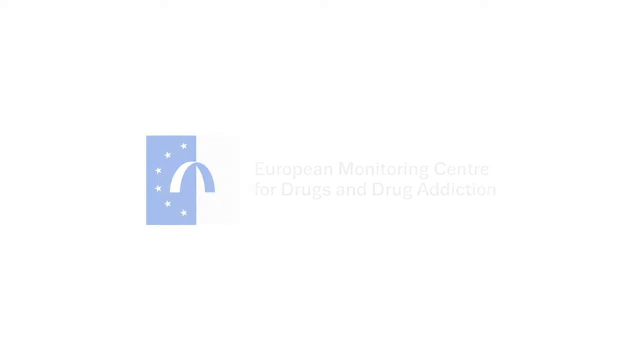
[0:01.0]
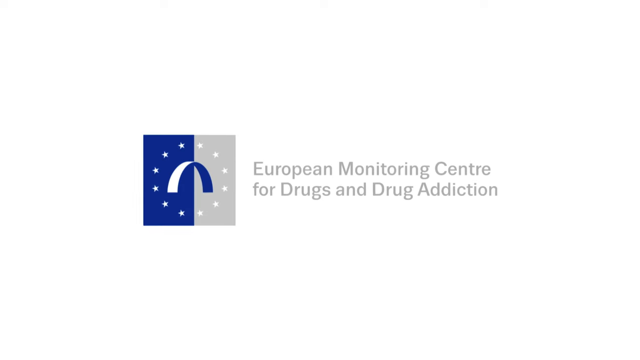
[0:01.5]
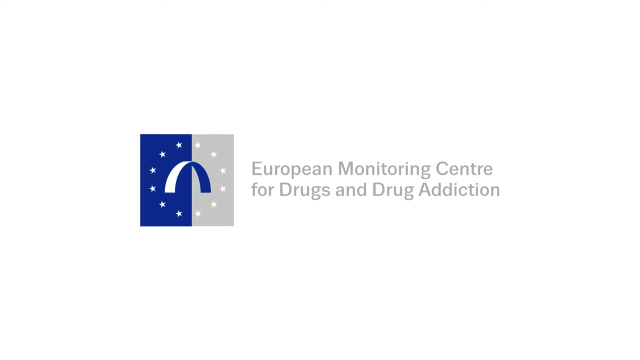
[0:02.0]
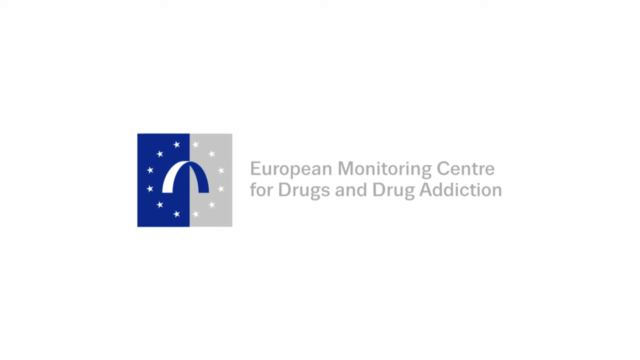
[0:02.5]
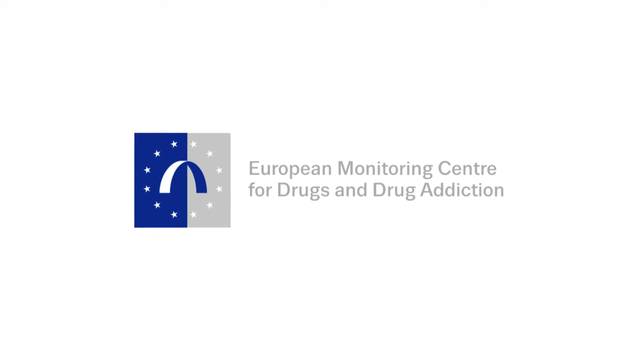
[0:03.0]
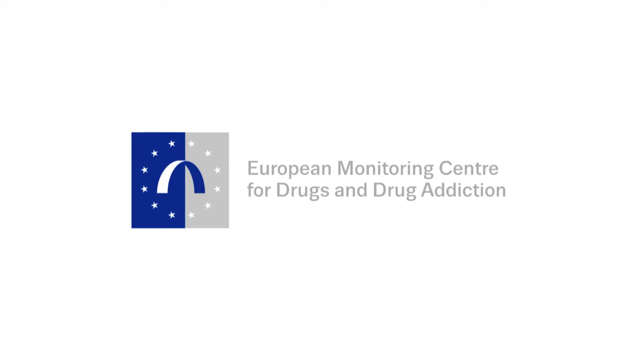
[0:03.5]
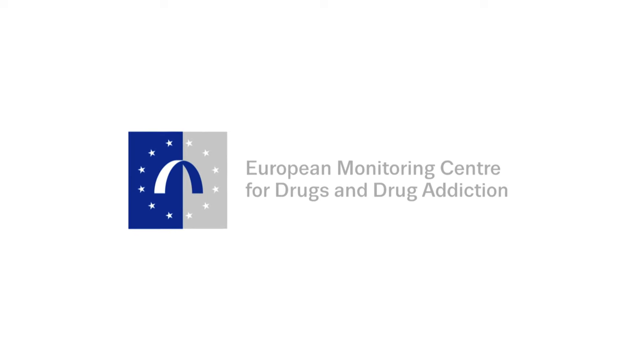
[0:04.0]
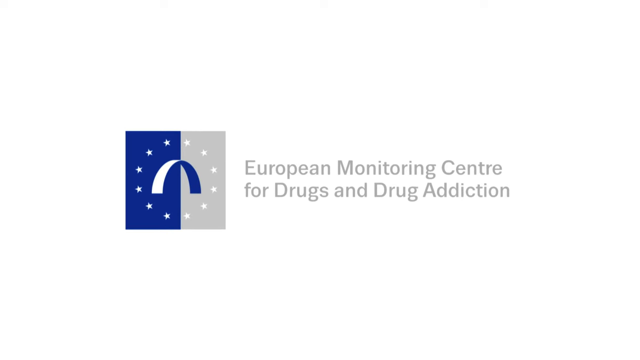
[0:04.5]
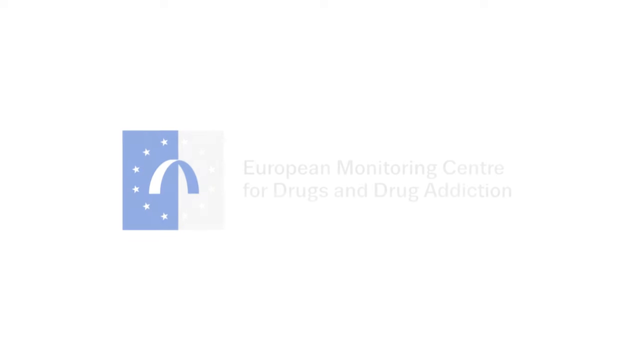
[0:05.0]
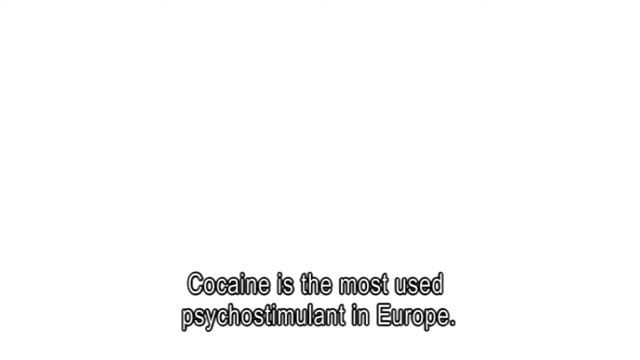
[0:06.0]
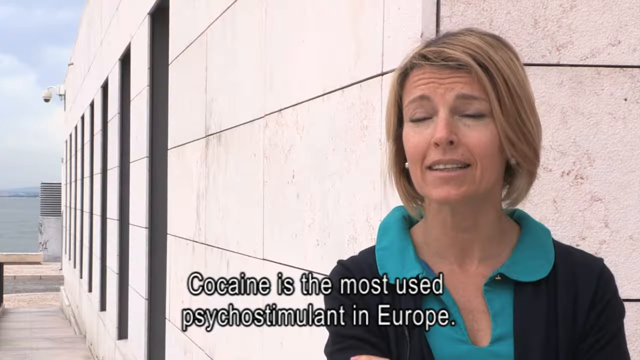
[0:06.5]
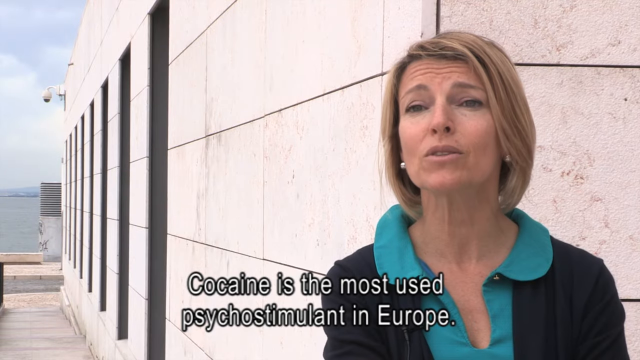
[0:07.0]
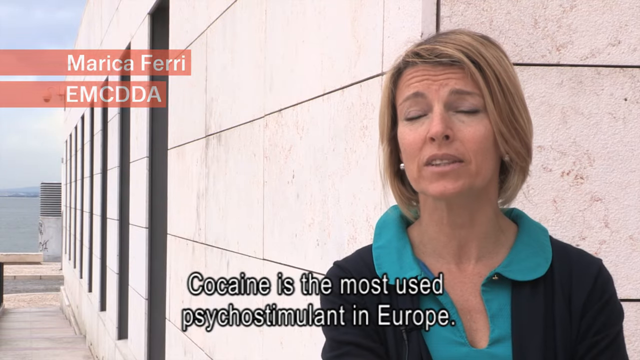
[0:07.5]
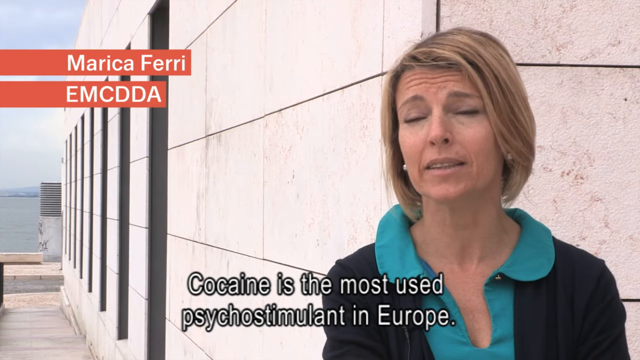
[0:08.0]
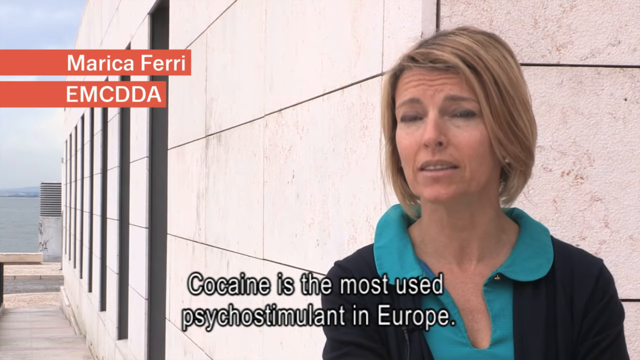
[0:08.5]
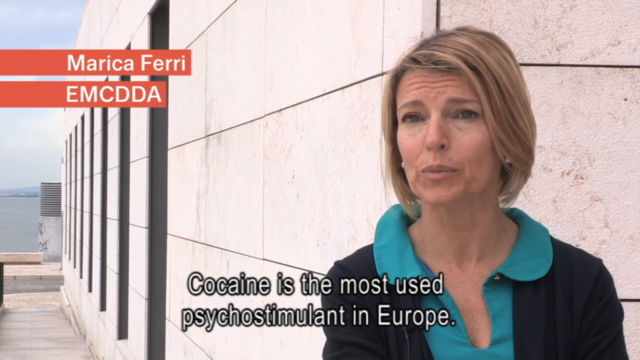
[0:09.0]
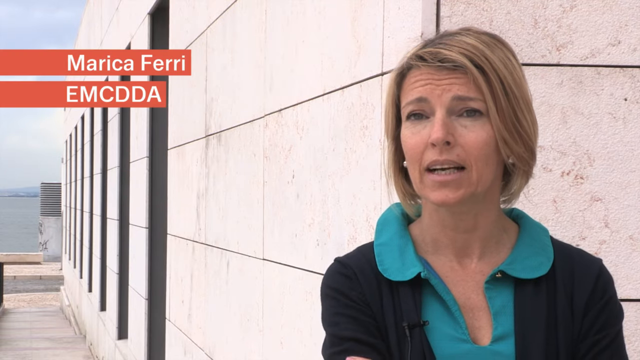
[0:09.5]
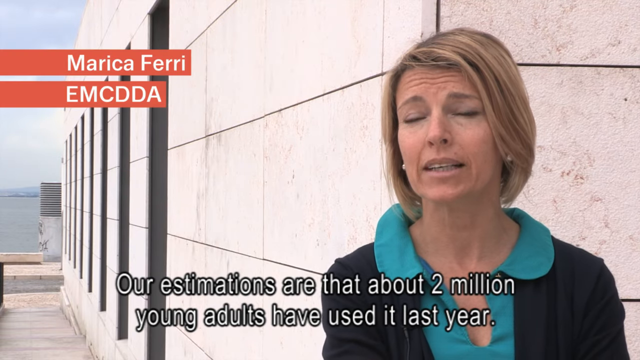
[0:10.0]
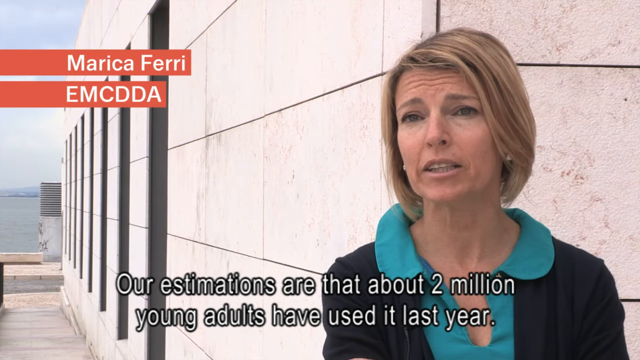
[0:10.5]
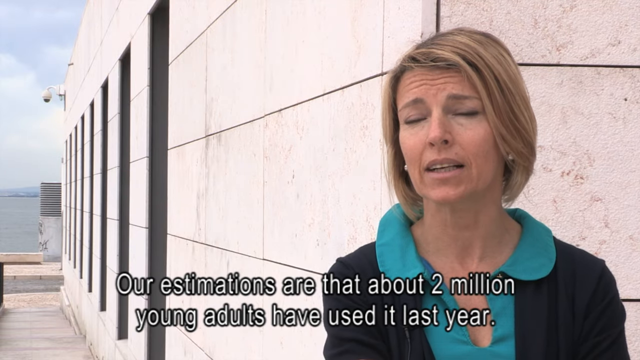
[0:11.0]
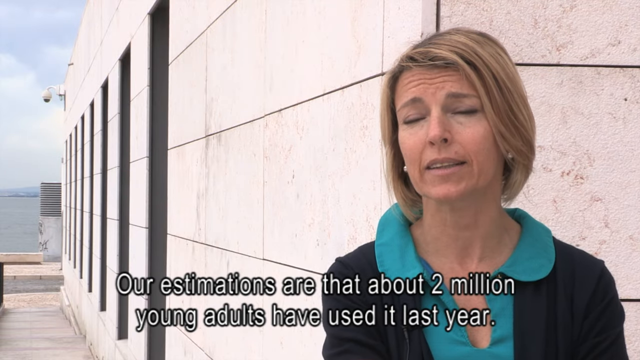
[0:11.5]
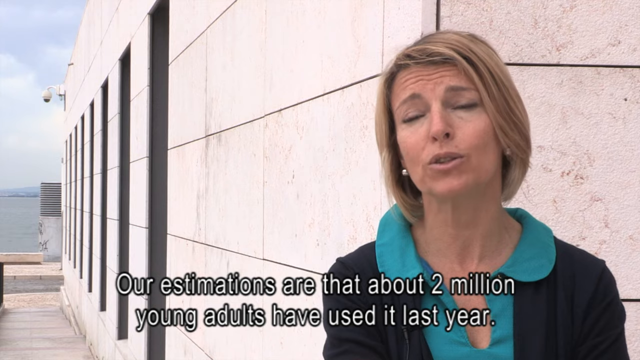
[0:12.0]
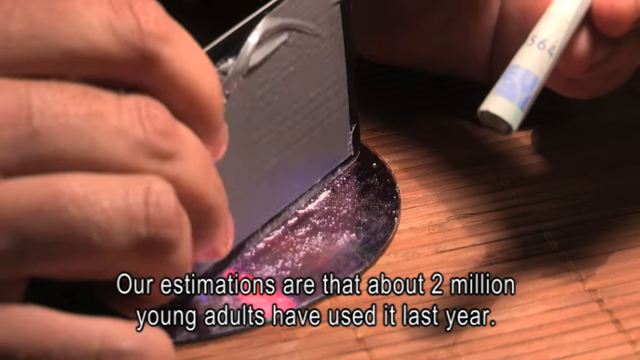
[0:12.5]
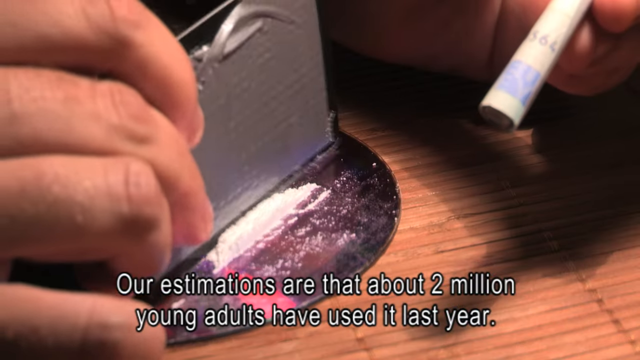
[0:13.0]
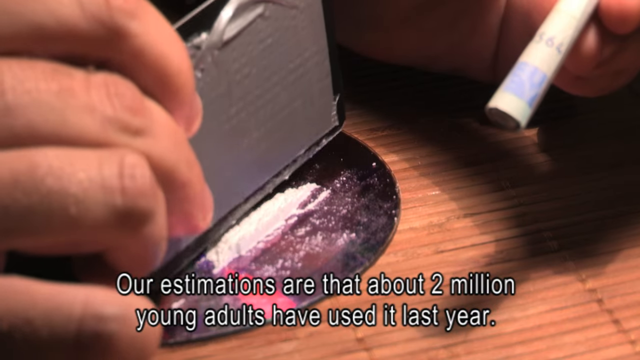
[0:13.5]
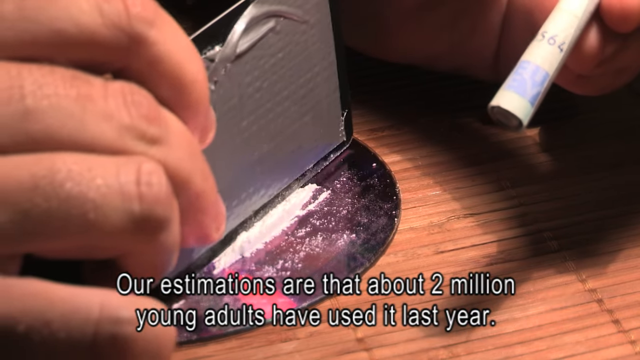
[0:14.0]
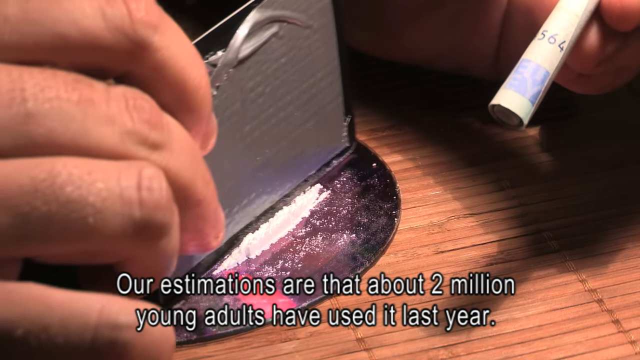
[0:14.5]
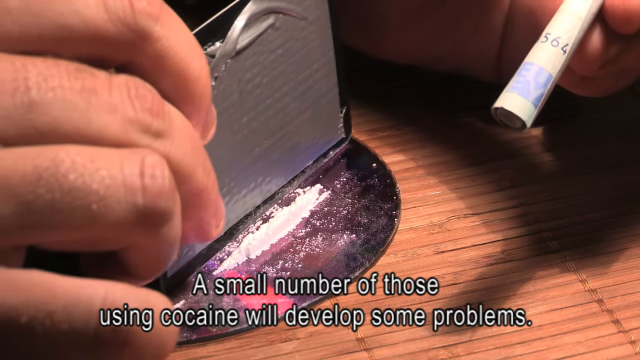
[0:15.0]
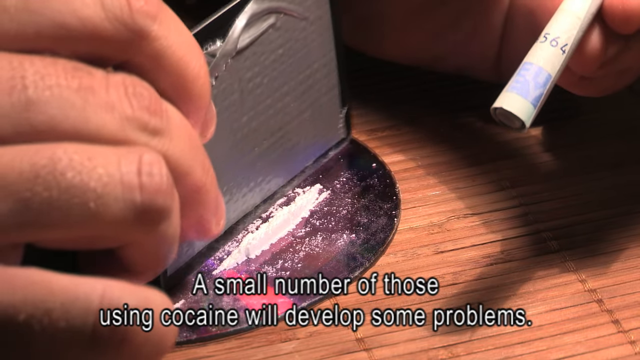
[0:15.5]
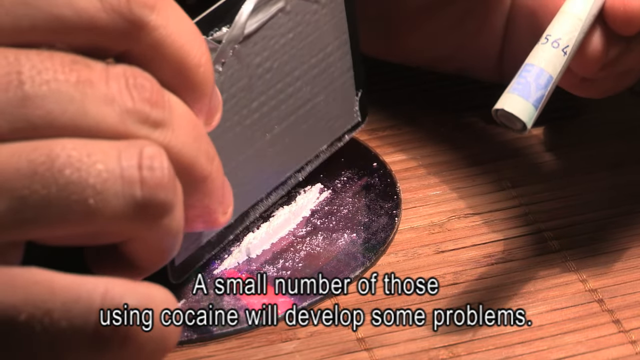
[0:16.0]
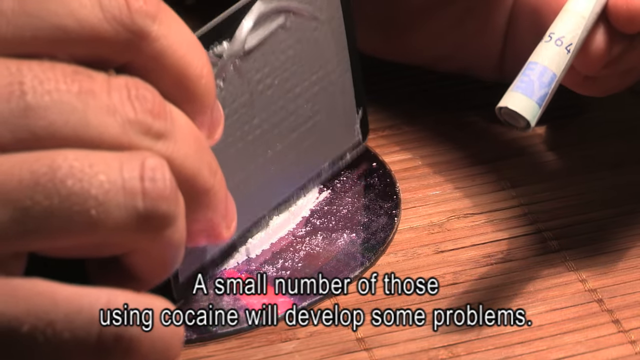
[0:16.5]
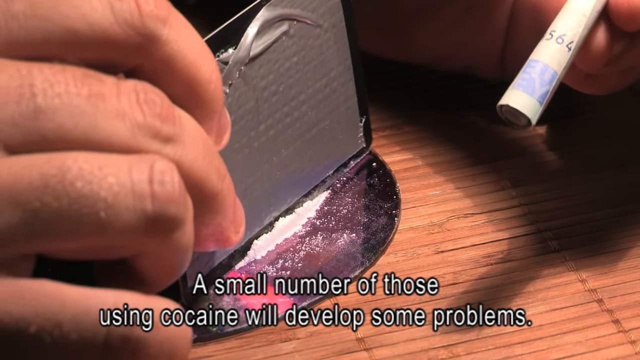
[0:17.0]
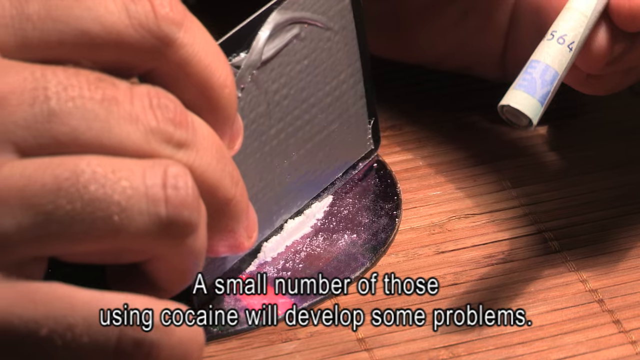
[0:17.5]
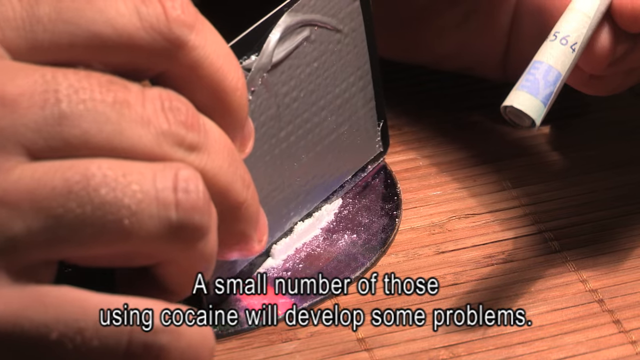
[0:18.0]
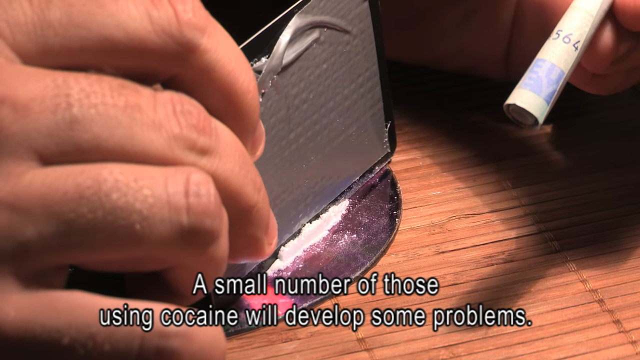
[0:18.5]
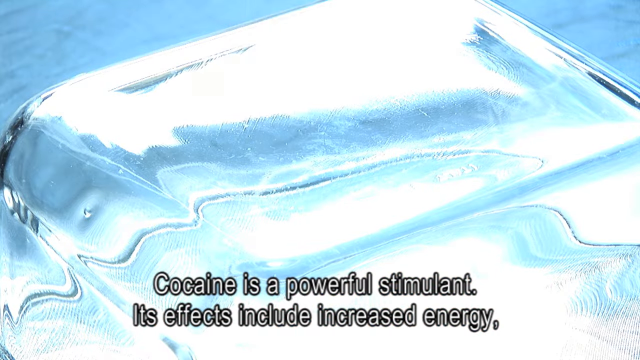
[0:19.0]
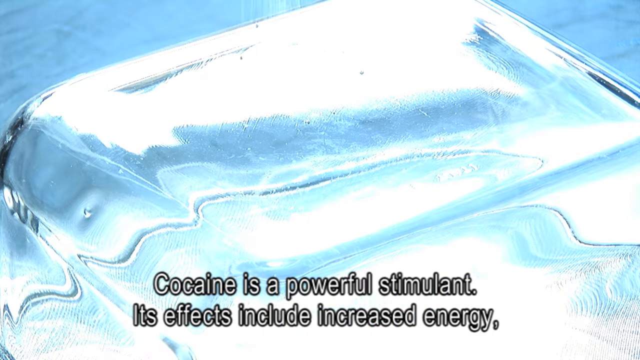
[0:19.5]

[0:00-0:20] Someone appears to be cutting a white powdery substance that looks like cocaine with some type of razor blade, arranging it into a kind of line. At one point the screen is blank. A piece of paper money is rolled up tightly, with the little numbers on the bottom of the bill visible, and it looks like it will be used to sniff the line.